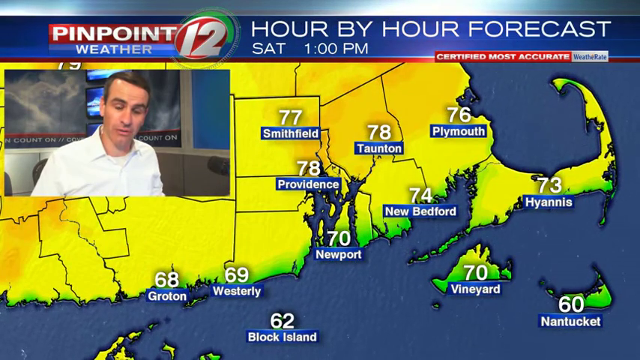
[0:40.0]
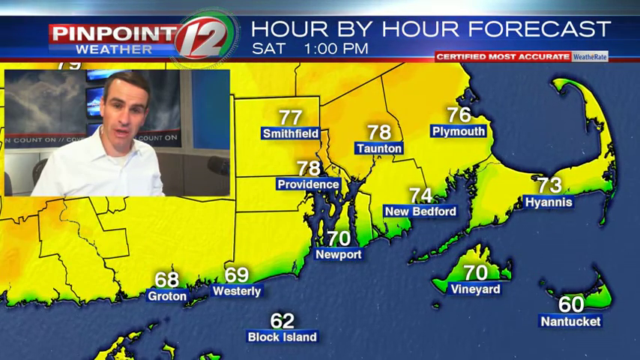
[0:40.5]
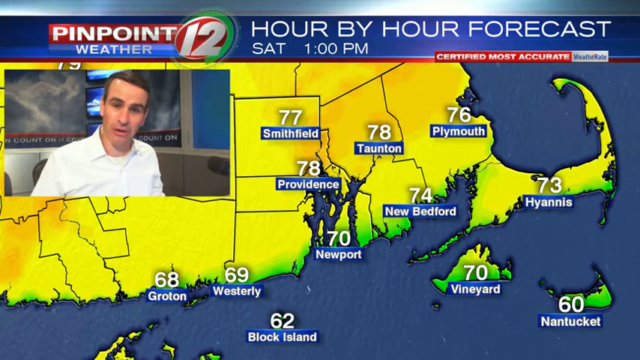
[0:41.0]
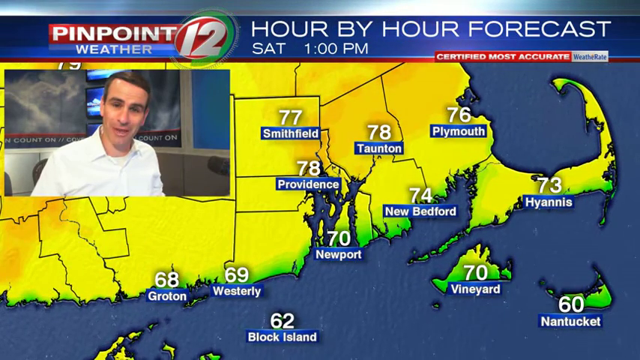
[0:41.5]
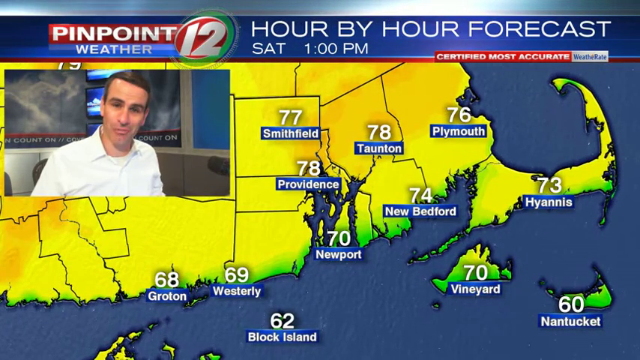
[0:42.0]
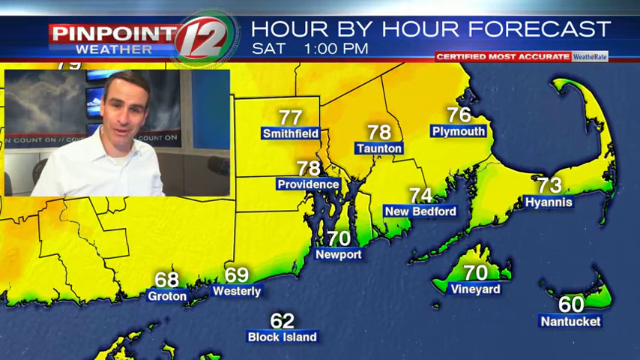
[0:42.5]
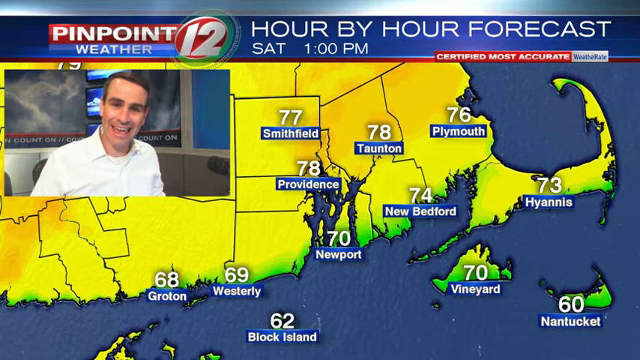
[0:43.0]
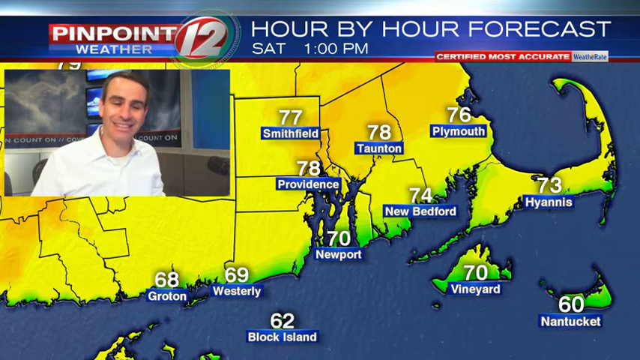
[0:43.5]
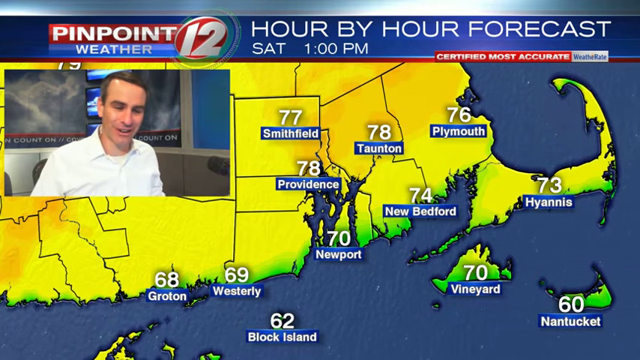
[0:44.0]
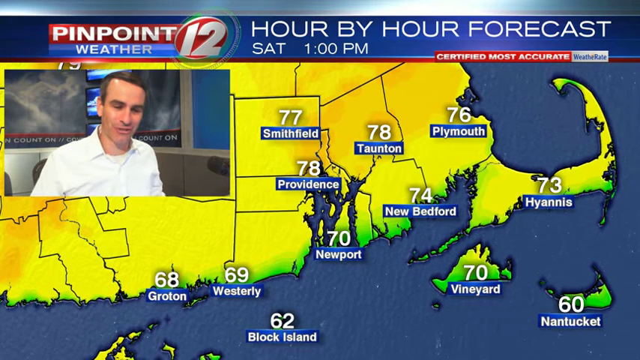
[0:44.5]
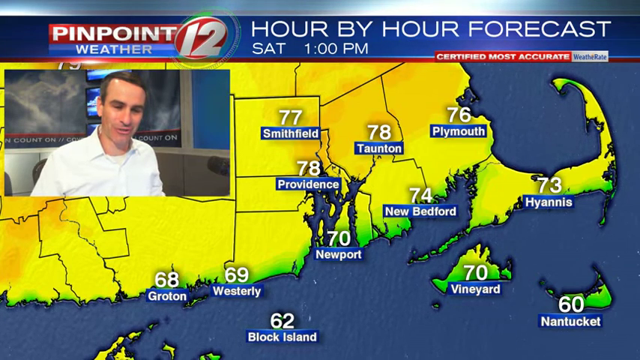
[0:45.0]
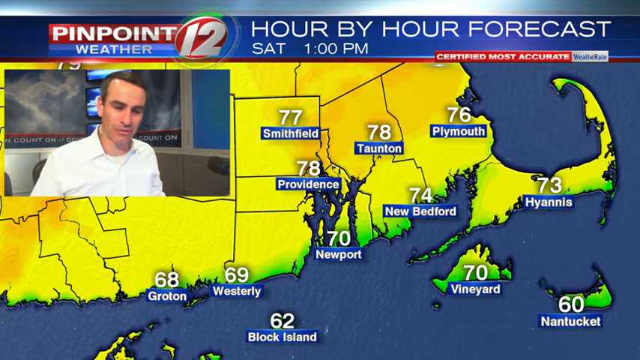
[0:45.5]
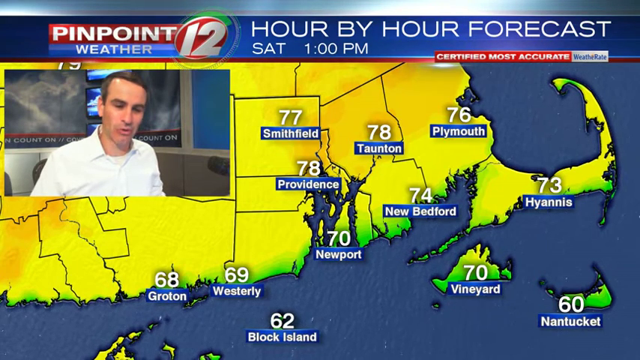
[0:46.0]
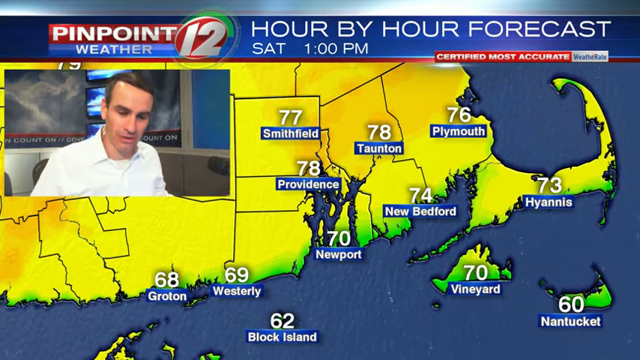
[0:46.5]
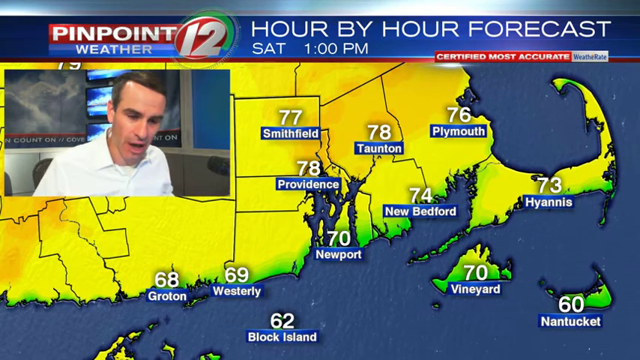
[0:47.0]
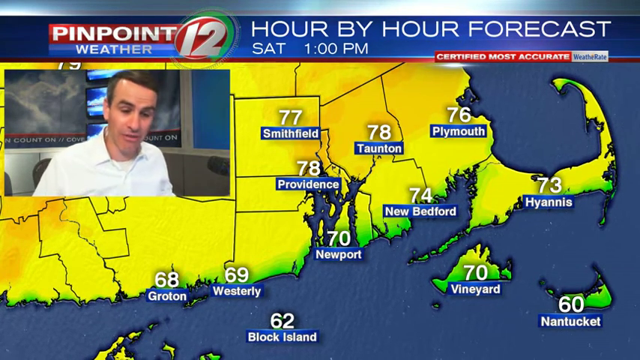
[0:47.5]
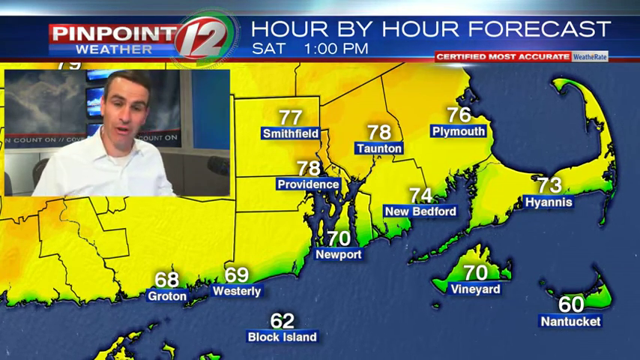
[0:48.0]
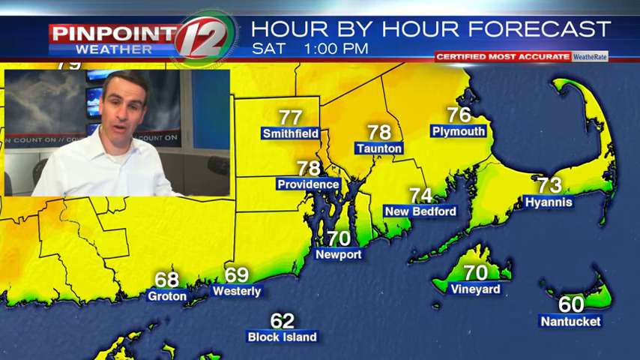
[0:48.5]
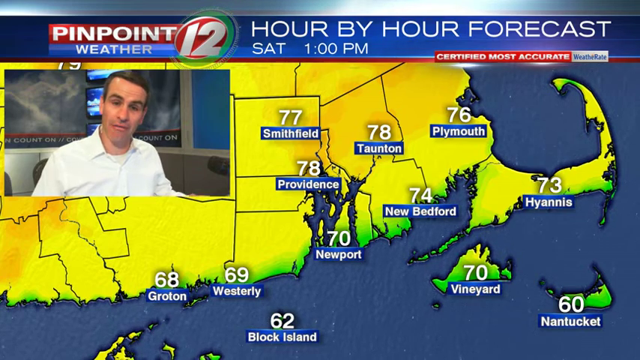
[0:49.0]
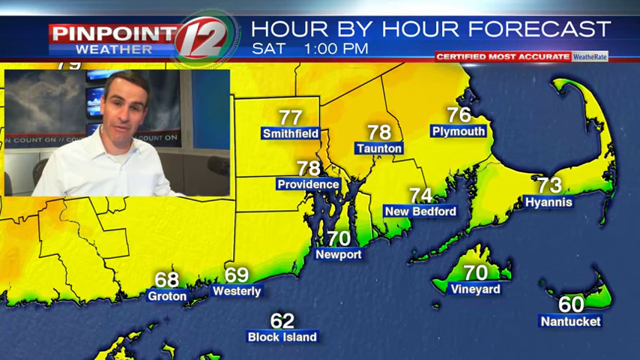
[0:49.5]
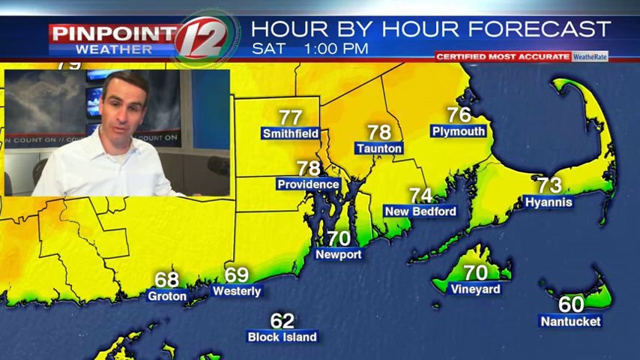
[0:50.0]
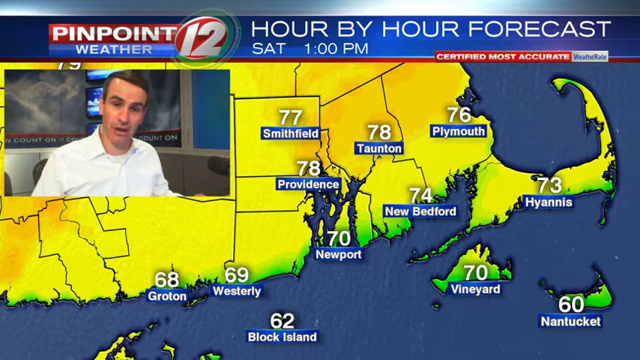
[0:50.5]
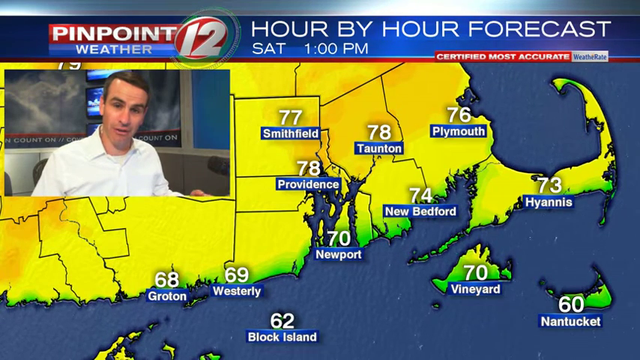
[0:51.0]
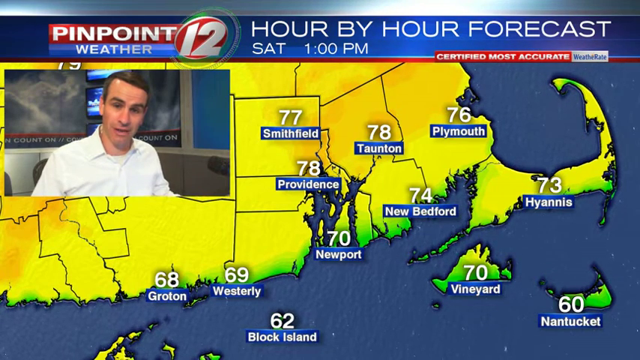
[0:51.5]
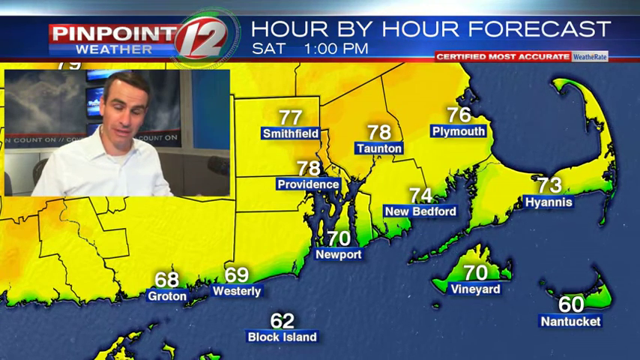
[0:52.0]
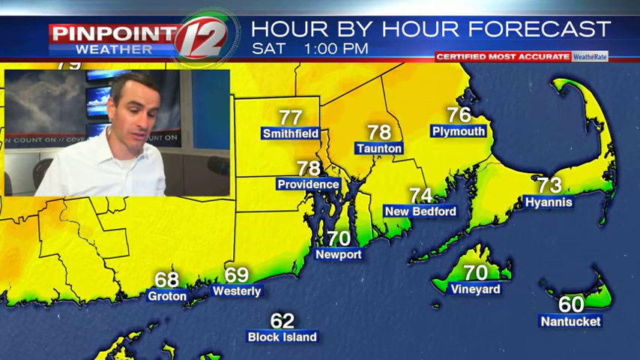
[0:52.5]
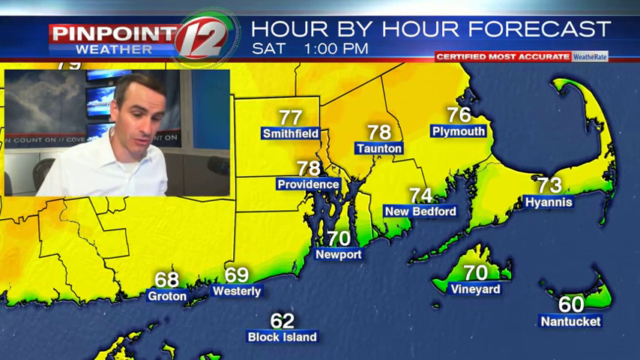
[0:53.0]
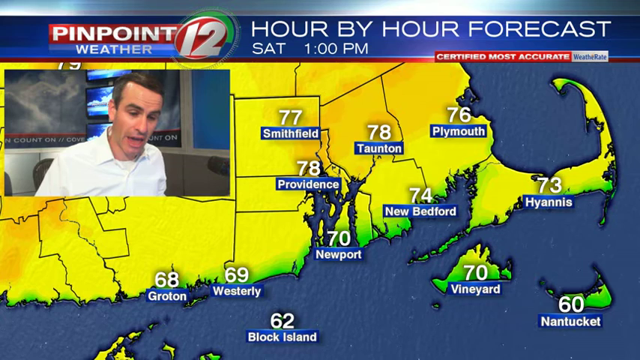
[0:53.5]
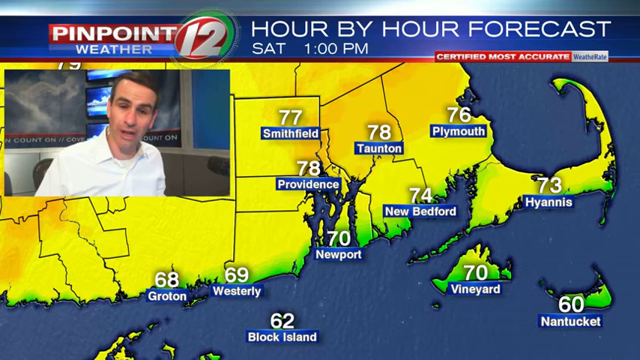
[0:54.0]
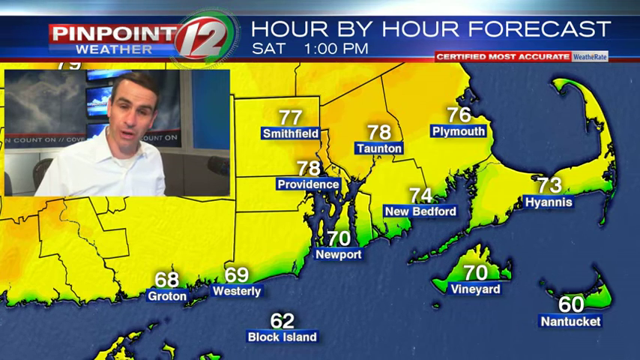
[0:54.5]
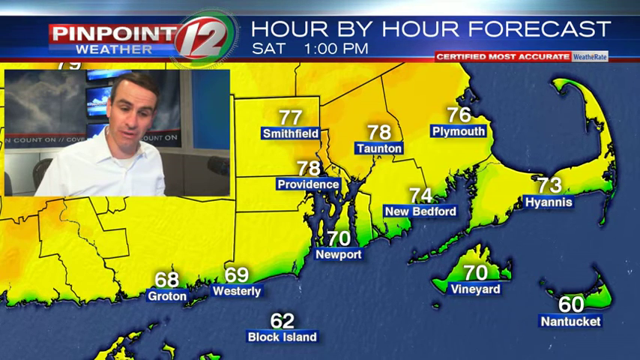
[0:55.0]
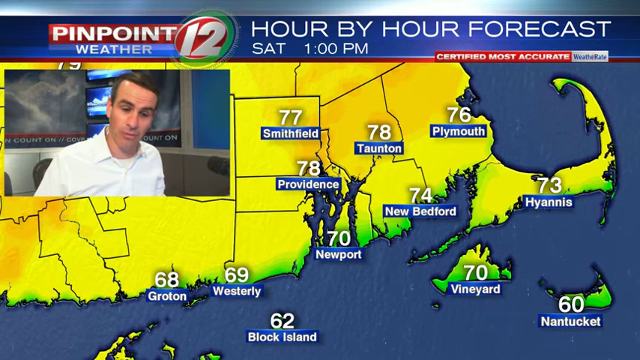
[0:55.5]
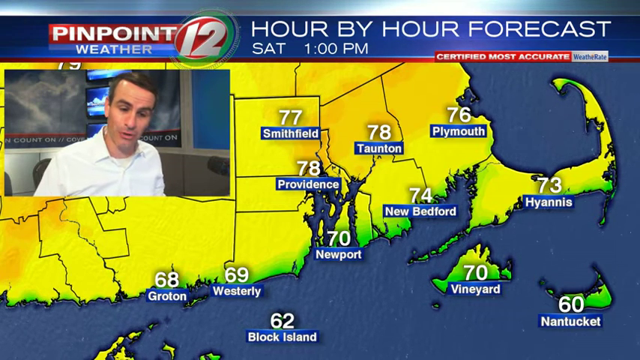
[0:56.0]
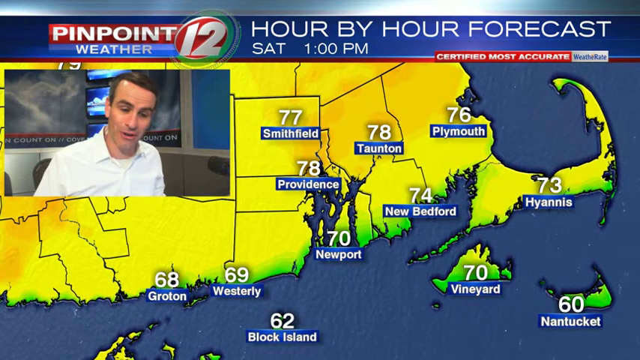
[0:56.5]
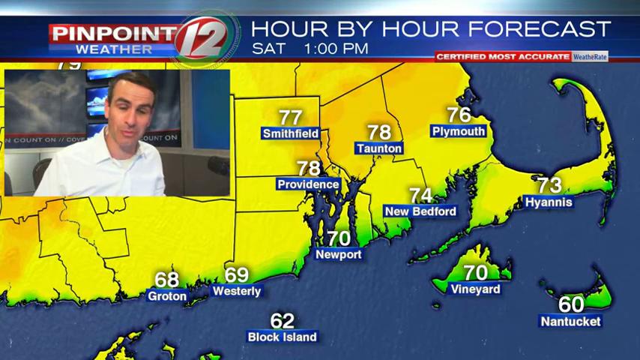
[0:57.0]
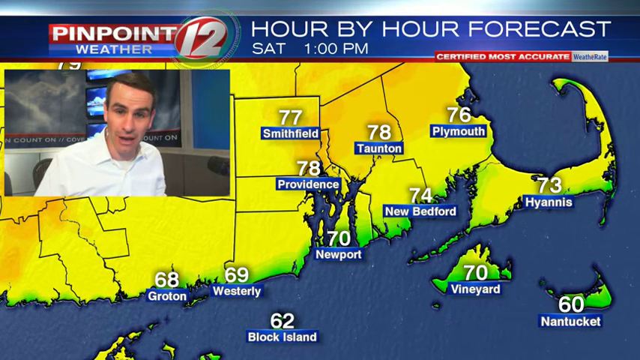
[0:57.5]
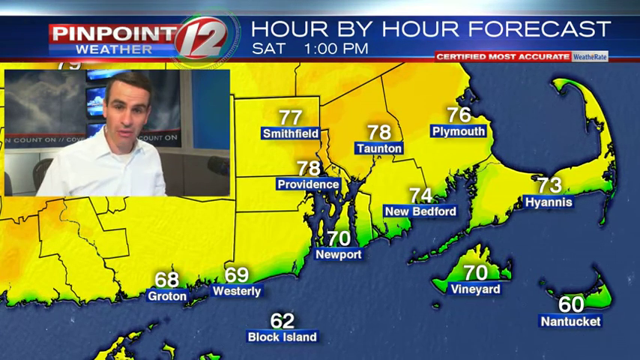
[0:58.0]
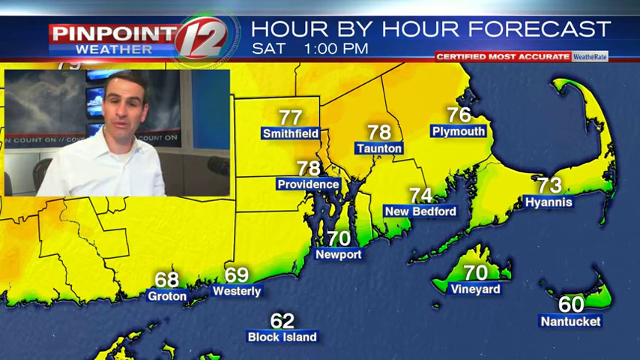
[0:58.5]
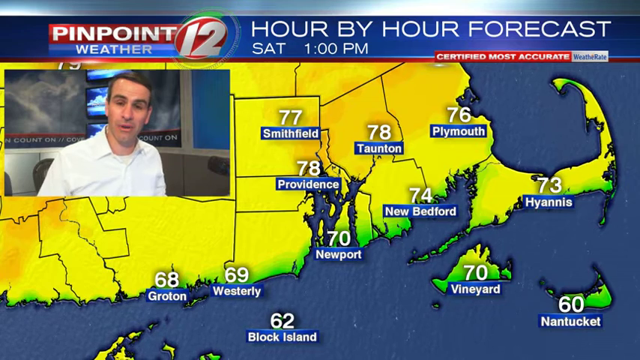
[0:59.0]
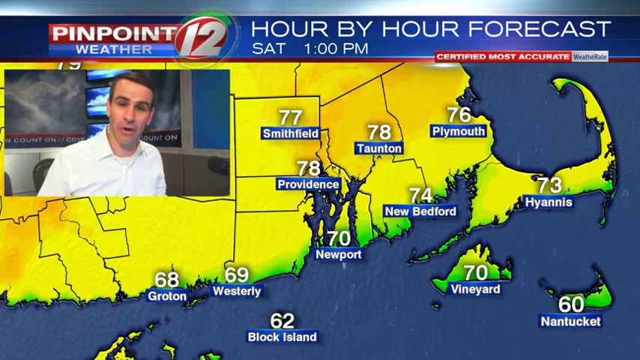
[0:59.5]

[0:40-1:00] The man continues presenting the cities on the map, each with a different temperature. Broughton, on the west side, is at 68 degrees, and Westerly, right next to Broughton, is at 69 degrees. Southeast of Westerly is Block Island at 62 degrees. To the northeast is Newport at 70 degrees. Up to the north, a little to the west, is Providence at 78 degrees, and a bit more to the northwest is Smithfield at 77 degrees. To the east is Tarleton at 78 degrees, and to the southeast New Bedford at 74 degrees. To the northeast is Plymouth at 76 degrees, to the south Vineyard at 70 degrees, and to the north Hyannis at 73 degrees. In the bottom right corner is Nantucket at 60 degrees.